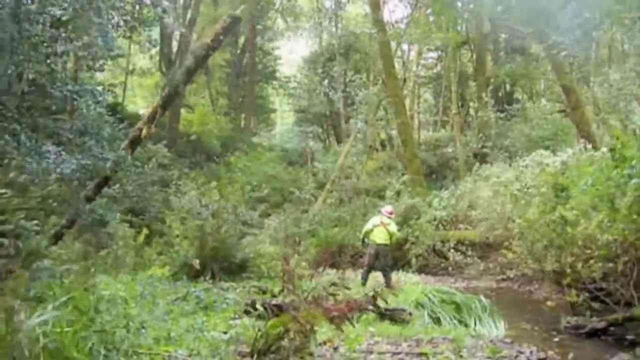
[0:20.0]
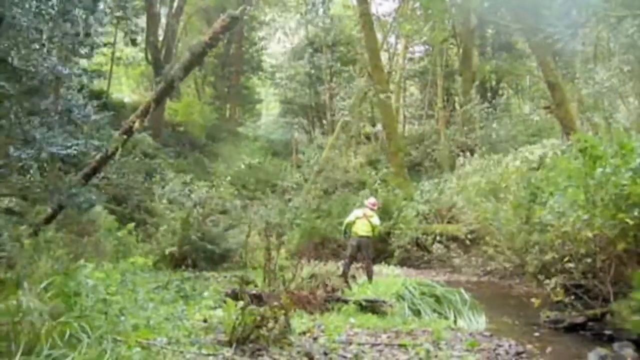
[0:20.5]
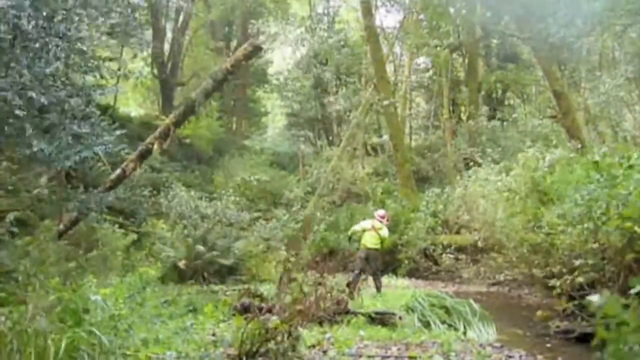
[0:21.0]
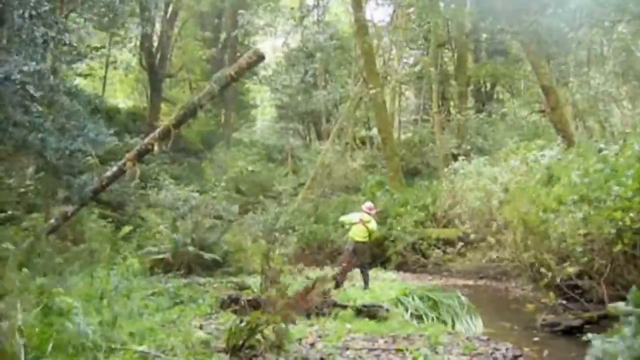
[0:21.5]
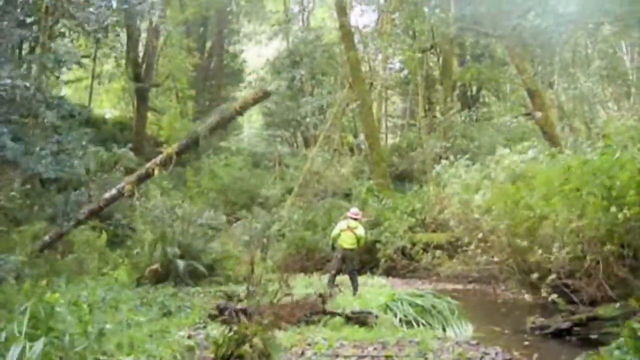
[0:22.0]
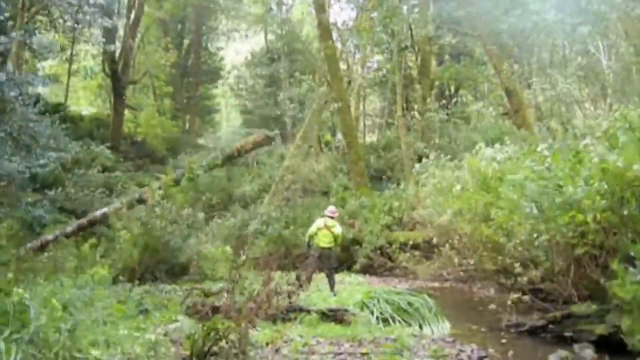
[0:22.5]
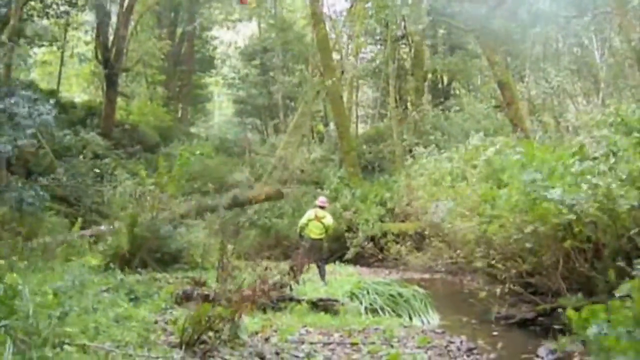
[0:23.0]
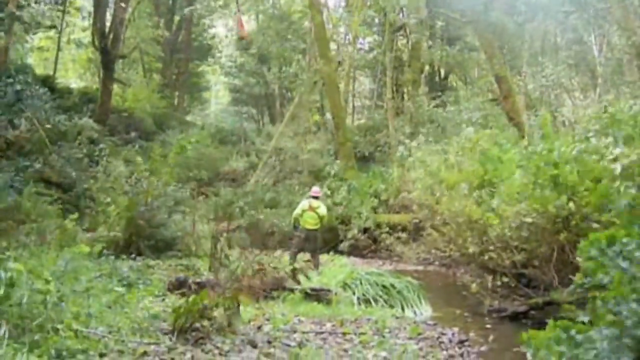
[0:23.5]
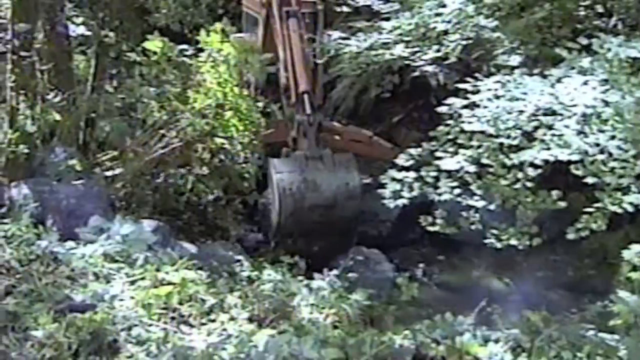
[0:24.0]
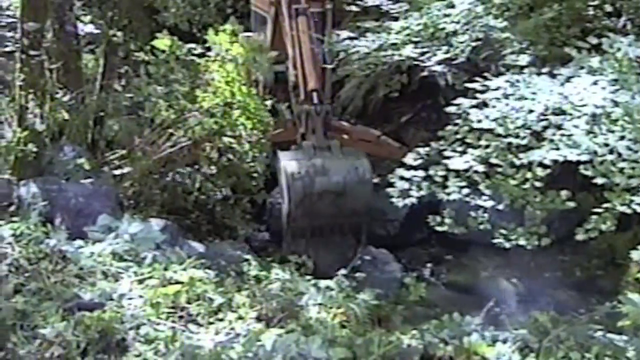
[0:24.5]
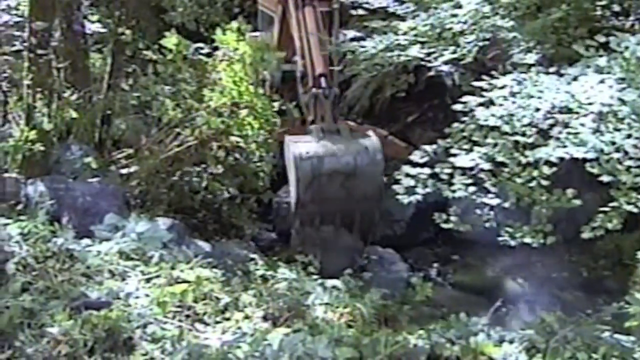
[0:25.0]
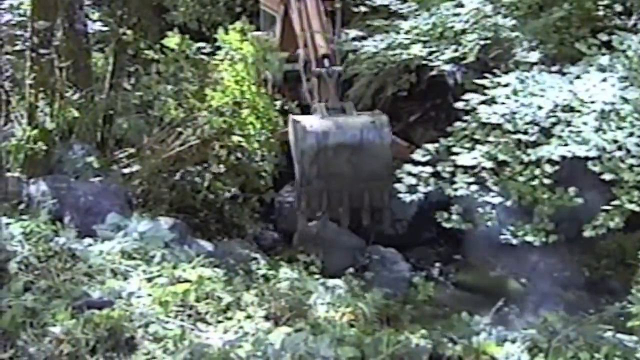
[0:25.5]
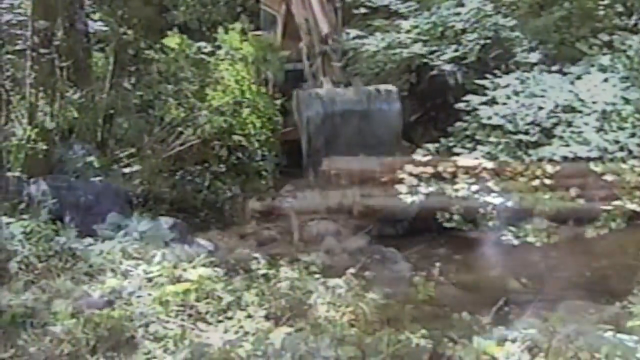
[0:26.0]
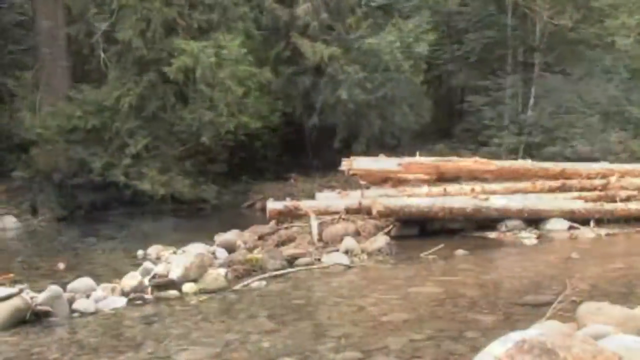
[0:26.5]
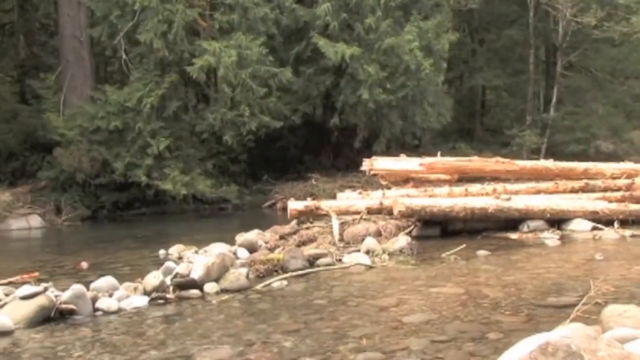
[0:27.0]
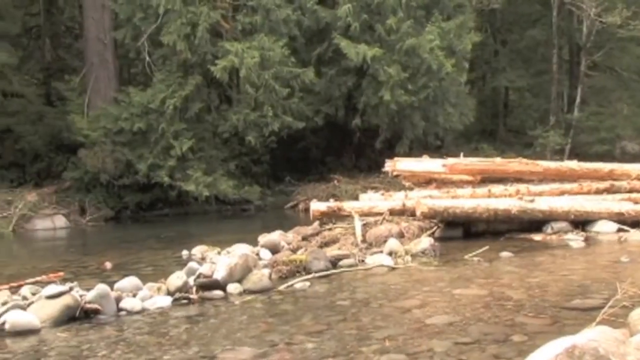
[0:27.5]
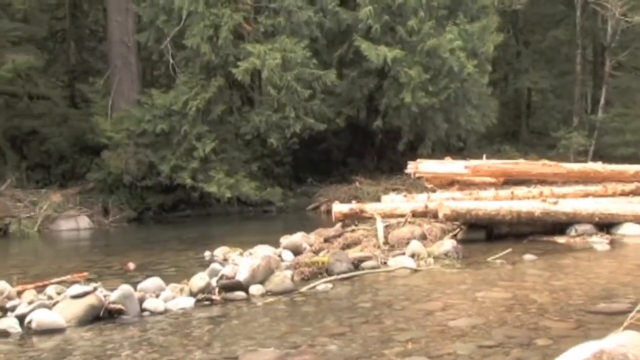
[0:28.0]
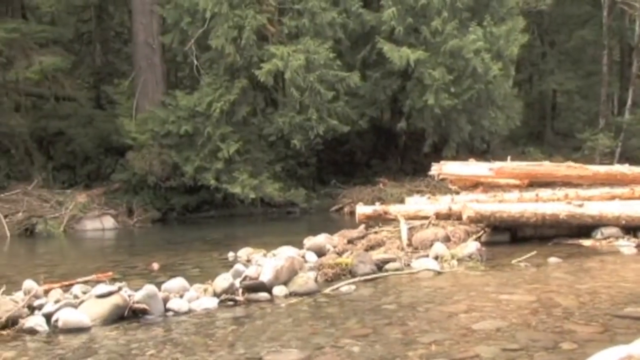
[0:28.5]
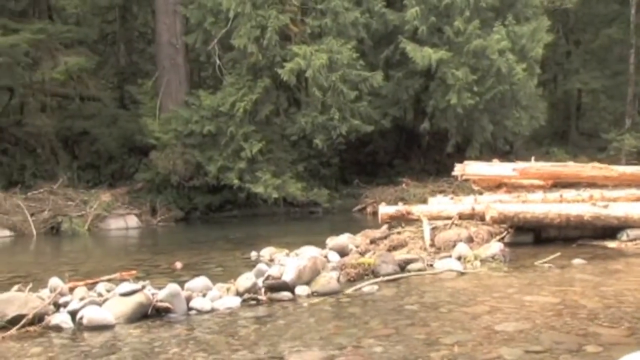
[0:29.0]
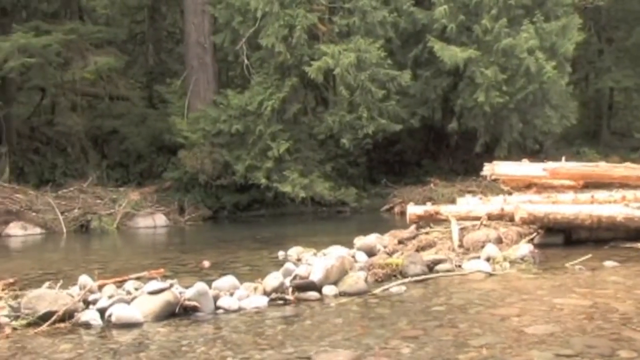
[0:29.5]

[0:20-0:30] A man wearing a construction hat, a green neon long-sleeve construction shirt and dark jeans or cargo pants is in the middle of a forest-like area overwhelmed with grass, bushes and shrubbery. Some of the trees are slanted as if they have been knocked down, and one very skinny tree comes falling down. The video cuts to an excavator digging within this forest, then to what looks to be a creek with murky, muddy brown water, where some rocks are visible and emerging from the water. Tree logs are stacked on top of each other on the rocks, and there are a lot of trees and bushes in the background.